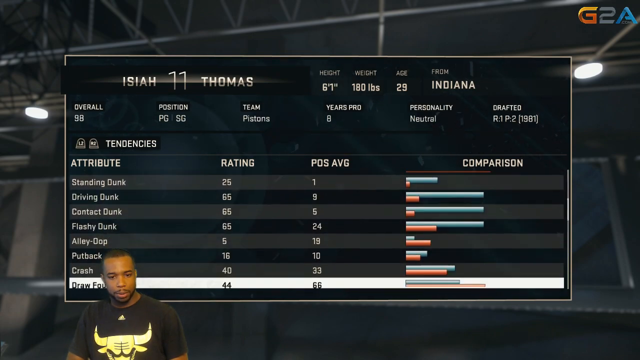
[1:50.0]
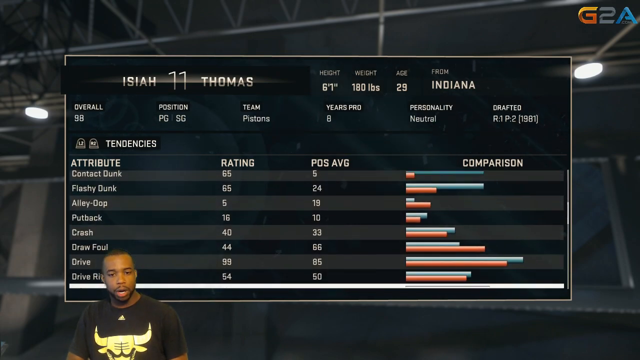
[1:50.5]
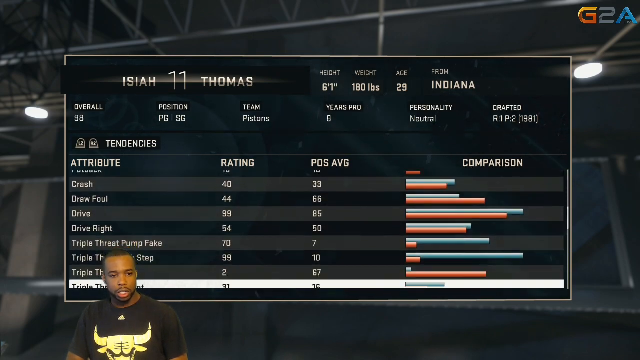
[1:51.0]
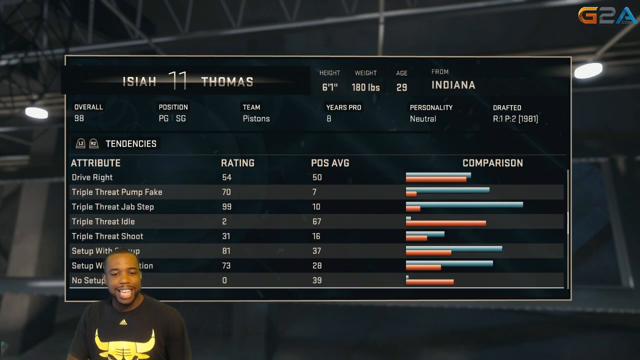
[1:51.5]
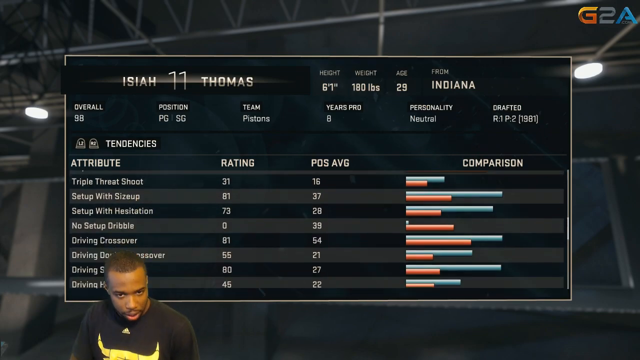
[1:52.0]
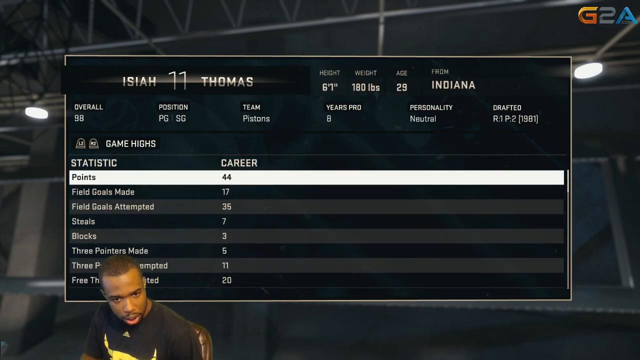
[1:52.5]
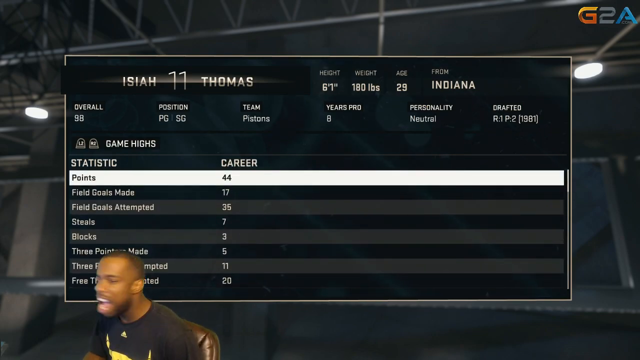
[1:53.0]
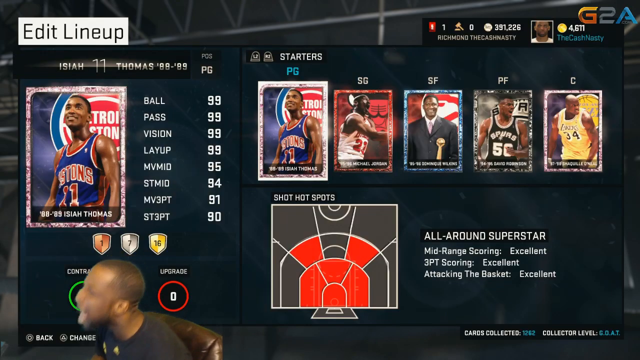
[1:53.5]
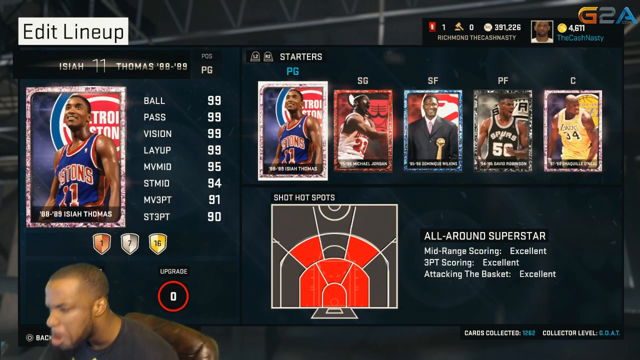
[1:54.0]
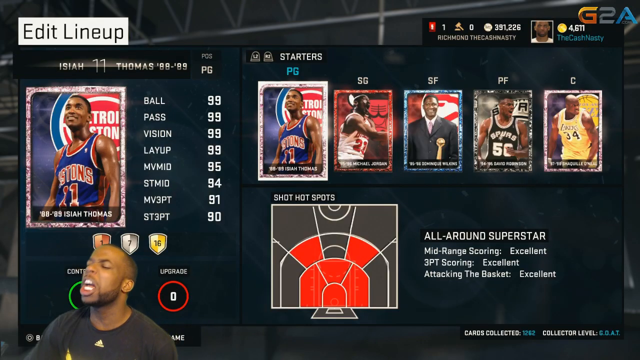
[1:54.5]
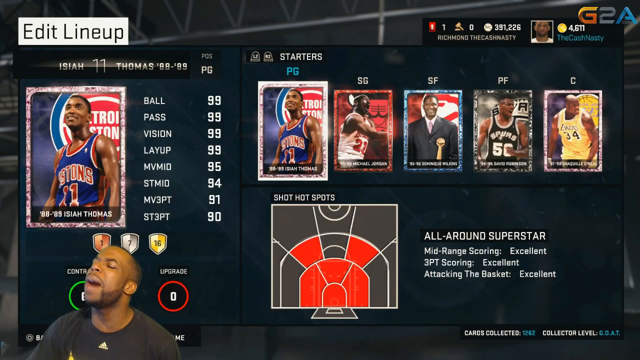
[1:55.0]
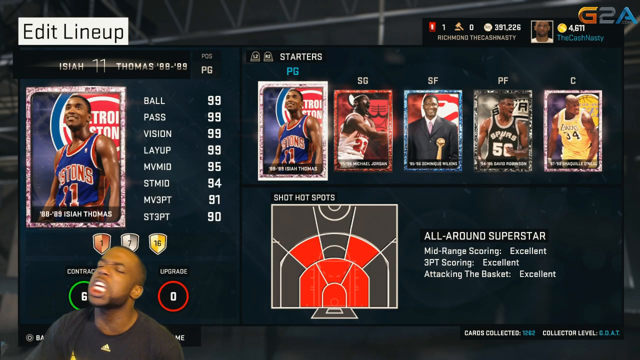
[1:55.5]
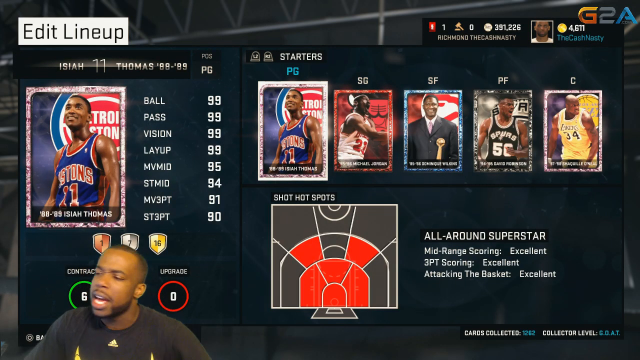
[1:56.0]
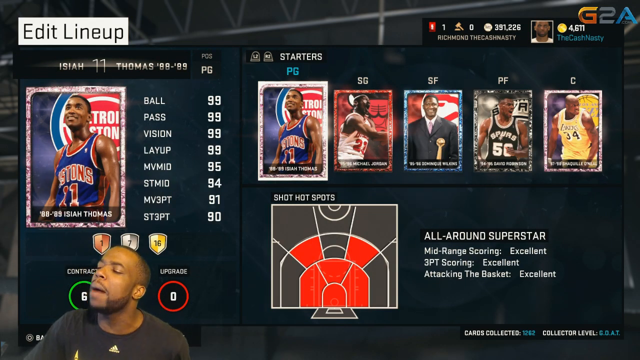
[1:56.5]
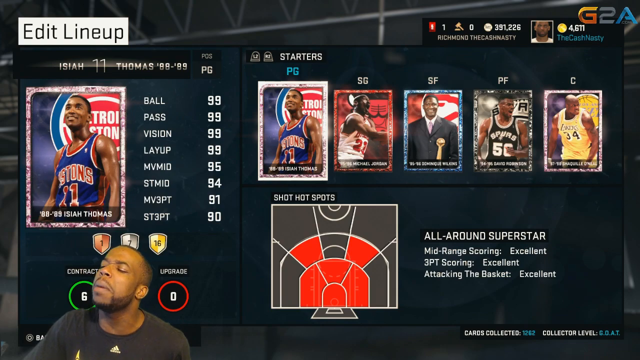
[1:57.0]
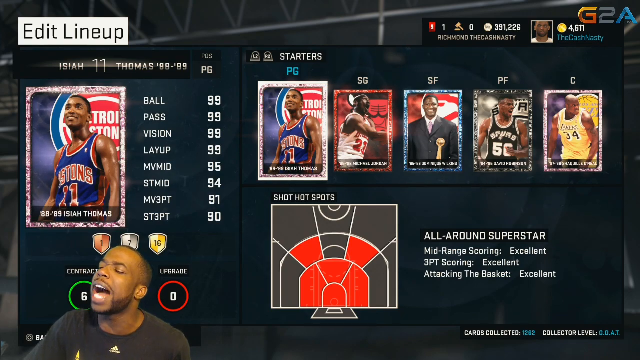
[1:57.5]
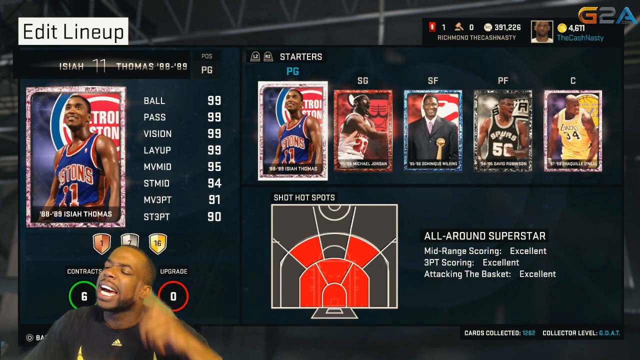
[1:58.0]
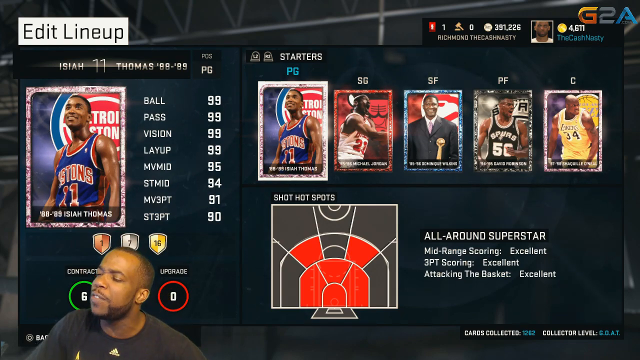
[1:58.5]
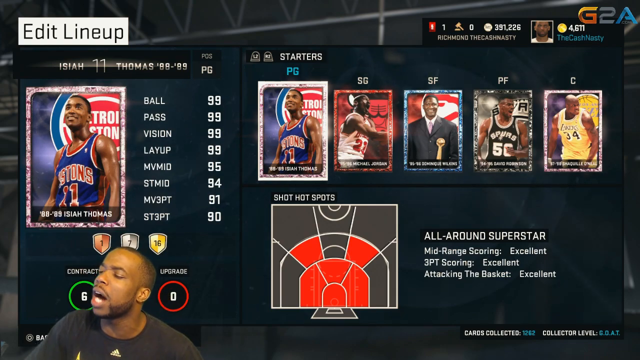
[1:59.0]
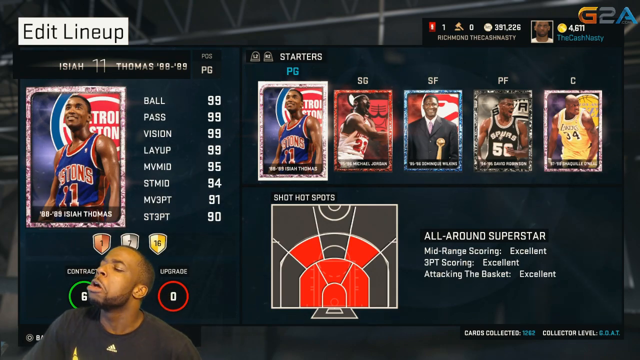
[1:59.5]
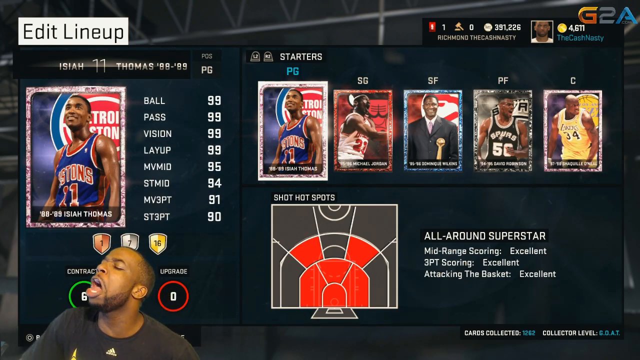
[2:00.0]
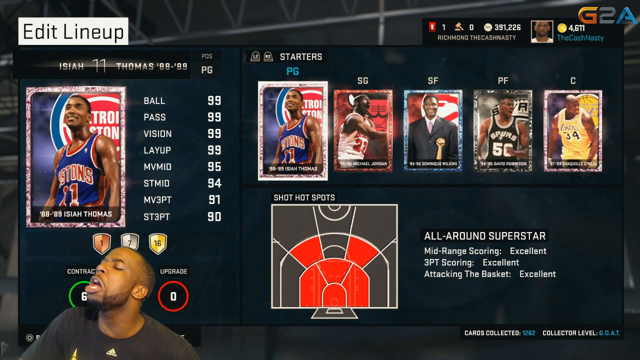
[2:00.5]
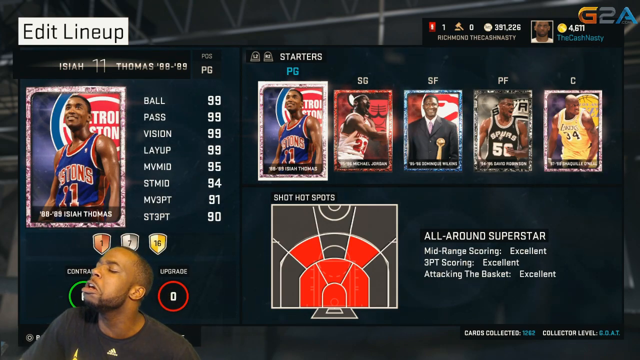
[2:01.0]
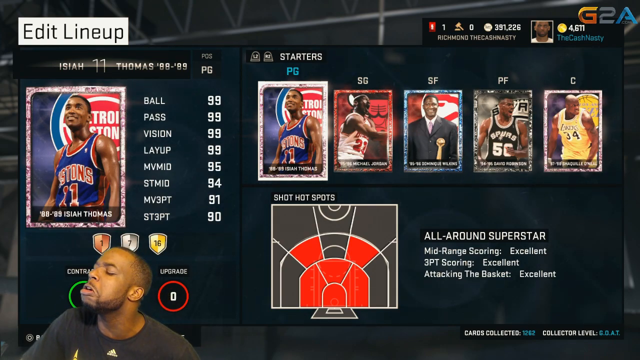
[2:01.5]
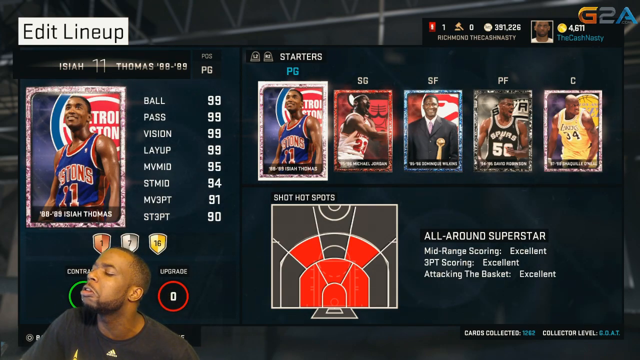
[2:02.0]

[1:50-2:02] The statistics for Isaiah Thomas continue. Then the screen changes to the earlier screen of trading cards, with various players appearing in the upper right. When one player's trading card is highlighted, a diagram appears in the lower right underneath, showing the shot hotspots for that player, the parts of the court from which they are most likely to score.